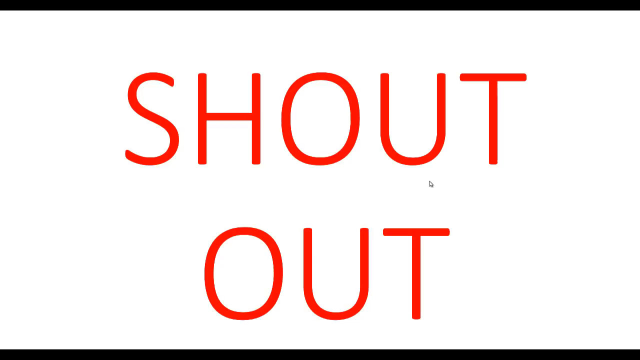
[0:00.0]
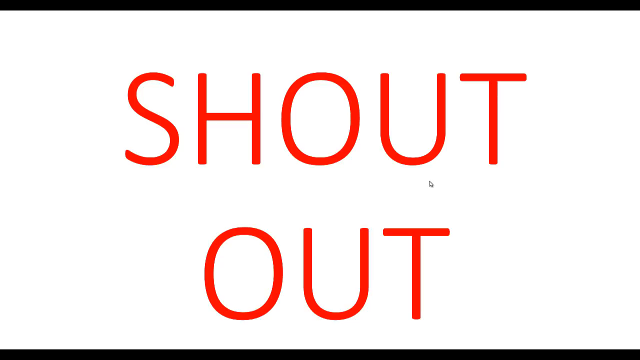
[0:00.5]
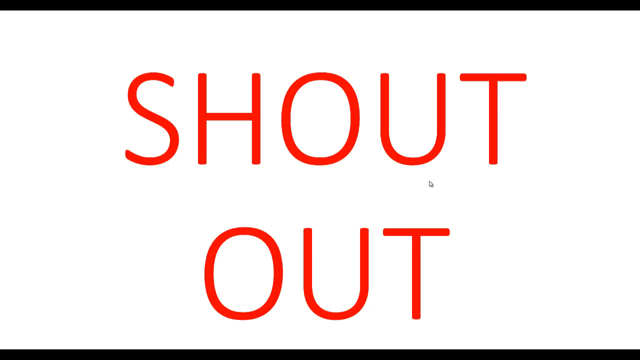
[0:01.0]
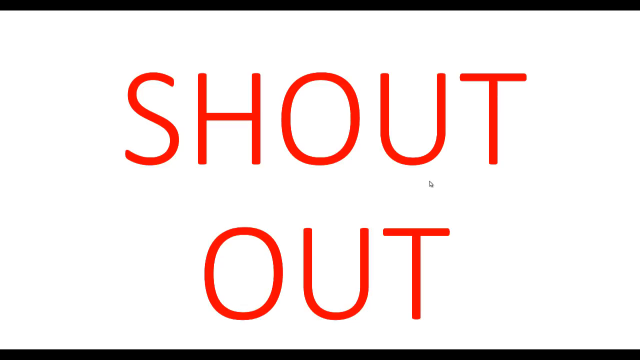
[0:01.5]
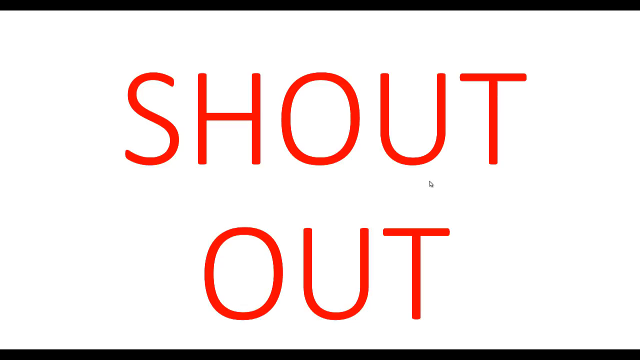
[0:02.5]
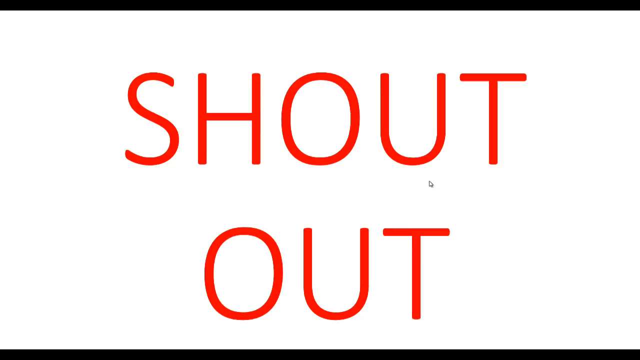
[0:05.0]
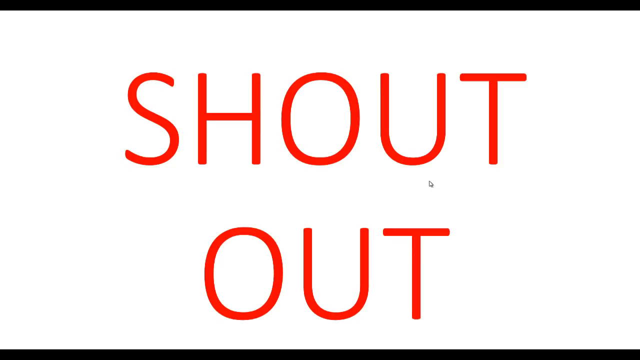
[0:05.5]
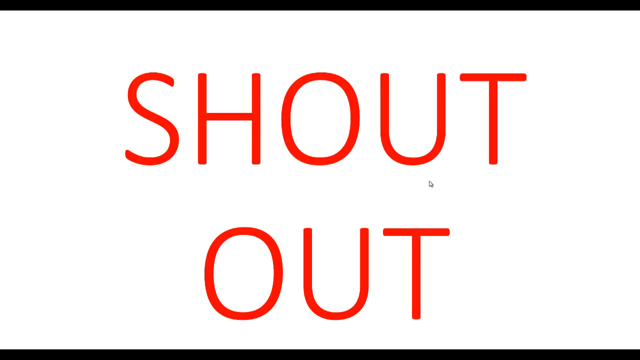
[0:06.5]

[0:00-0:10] A white screen has a black border along the top and bottom only; there are no black lines on the left or right sides. In the centre, the words "SHOUT OUT" are written in bright red capital letters. Nothing else appears and there is no movement: just the white background, the black border and the red capital text.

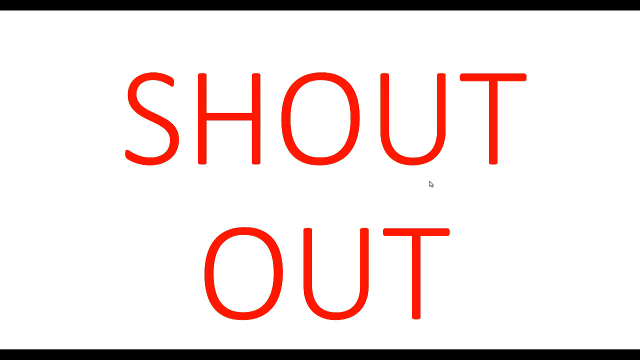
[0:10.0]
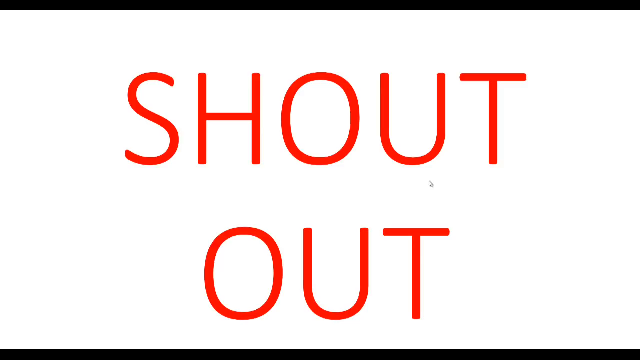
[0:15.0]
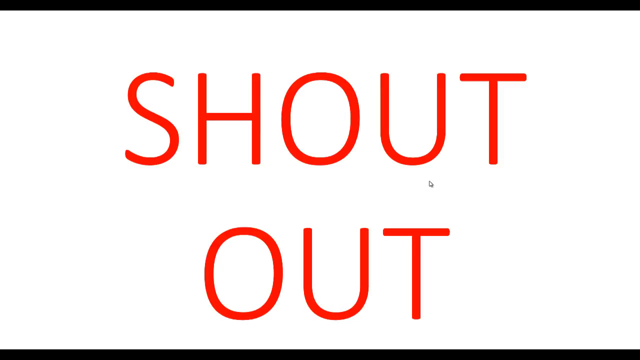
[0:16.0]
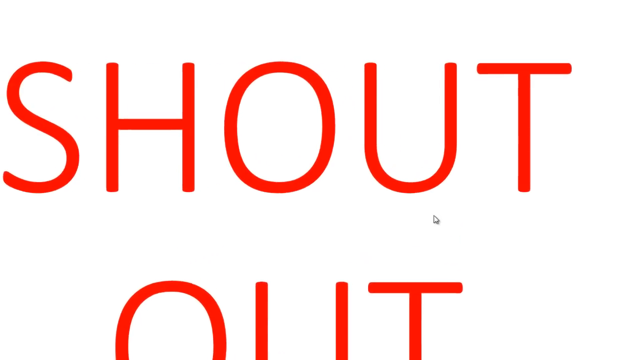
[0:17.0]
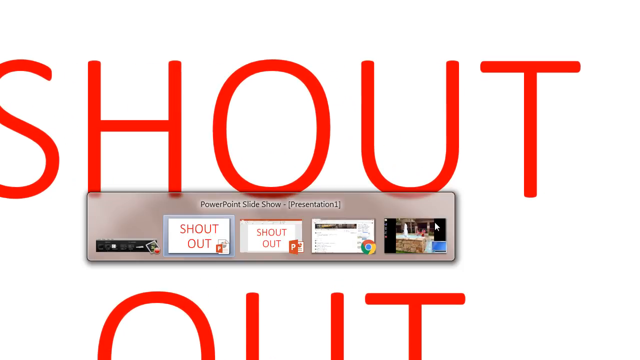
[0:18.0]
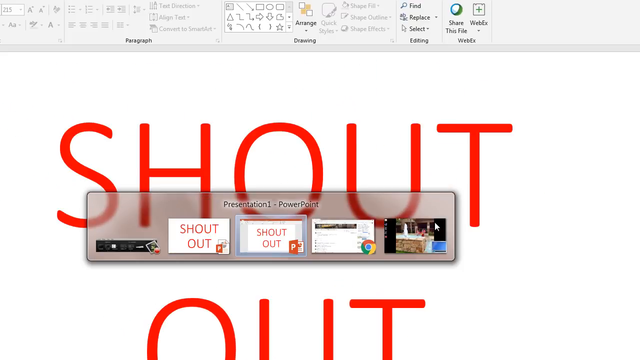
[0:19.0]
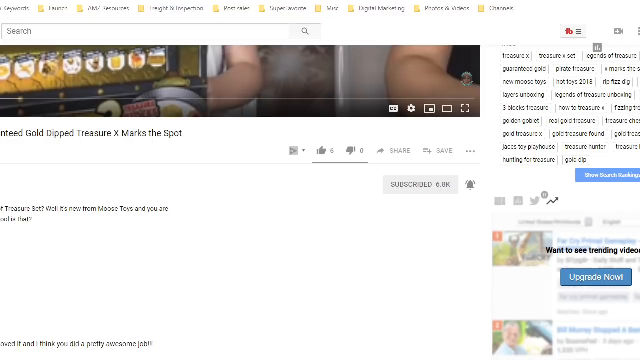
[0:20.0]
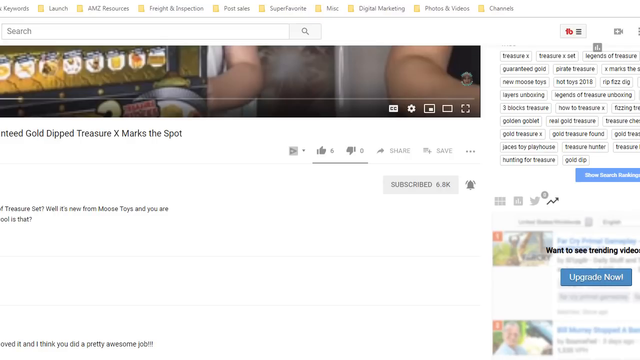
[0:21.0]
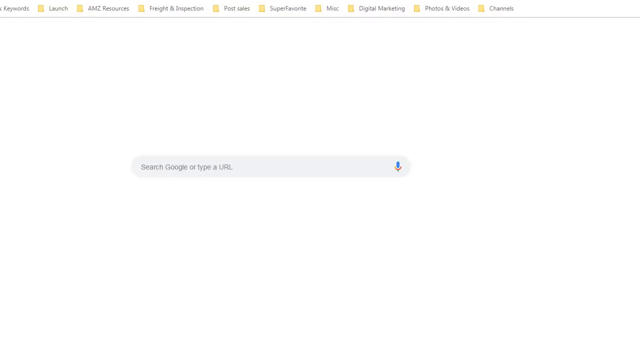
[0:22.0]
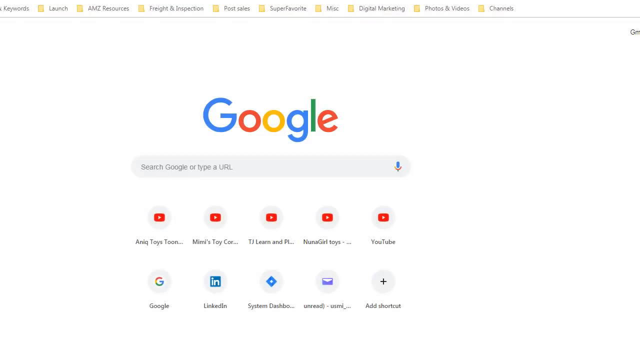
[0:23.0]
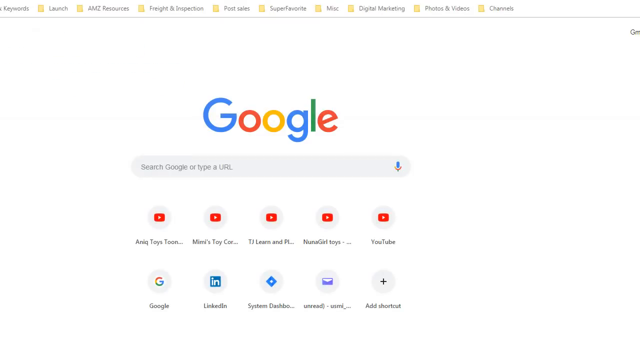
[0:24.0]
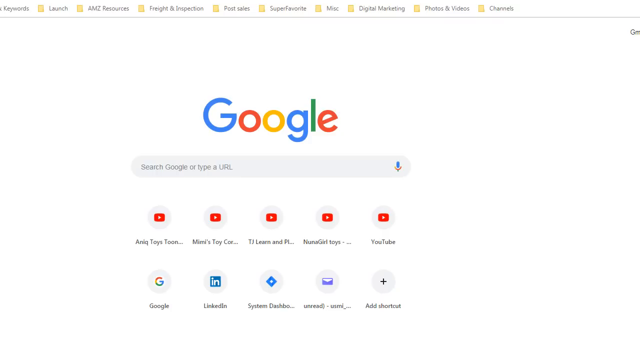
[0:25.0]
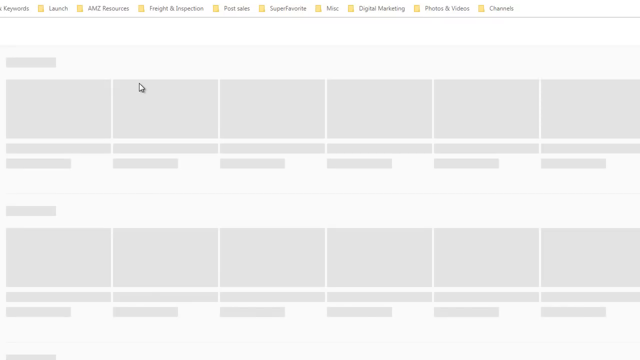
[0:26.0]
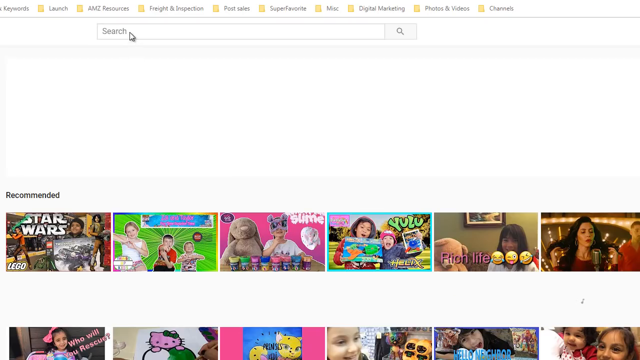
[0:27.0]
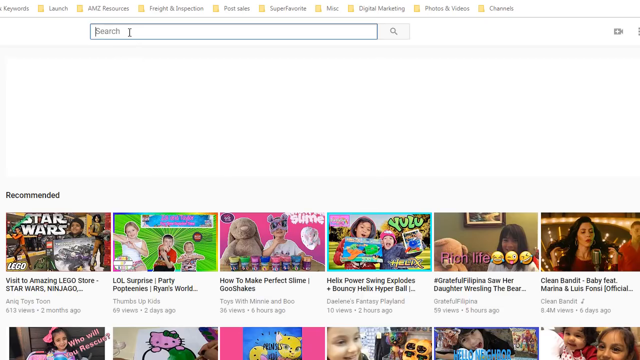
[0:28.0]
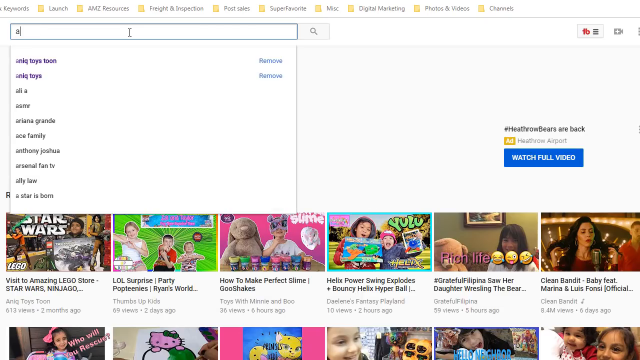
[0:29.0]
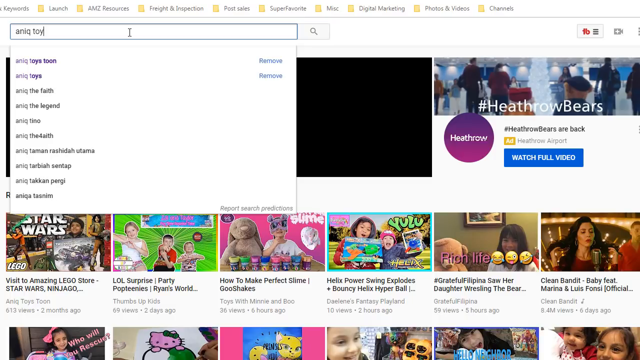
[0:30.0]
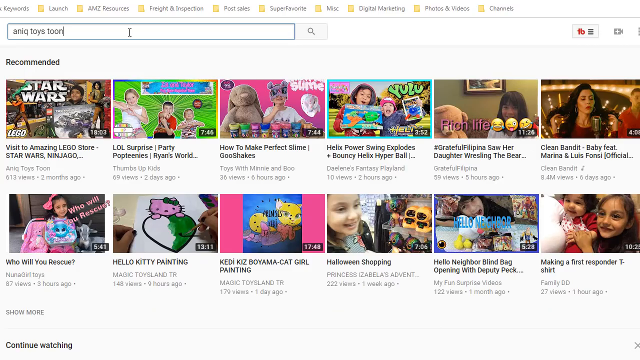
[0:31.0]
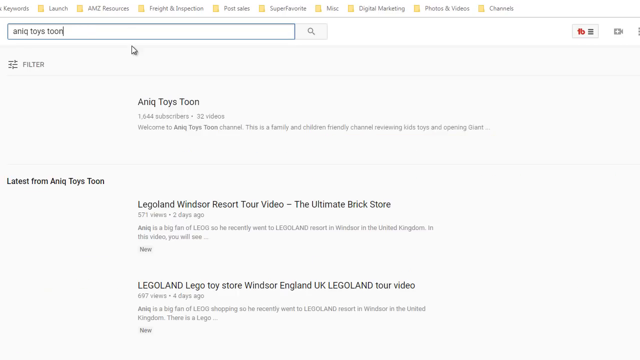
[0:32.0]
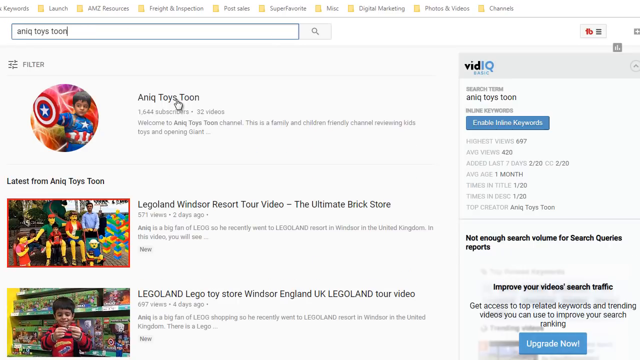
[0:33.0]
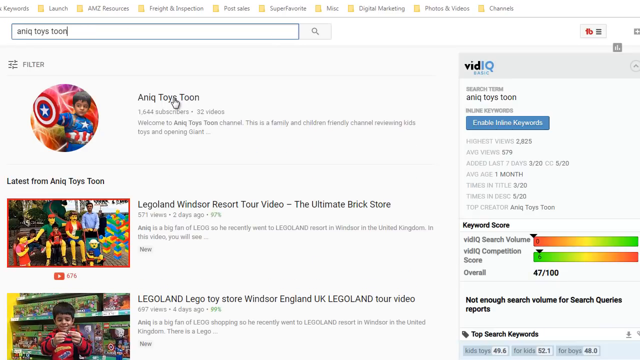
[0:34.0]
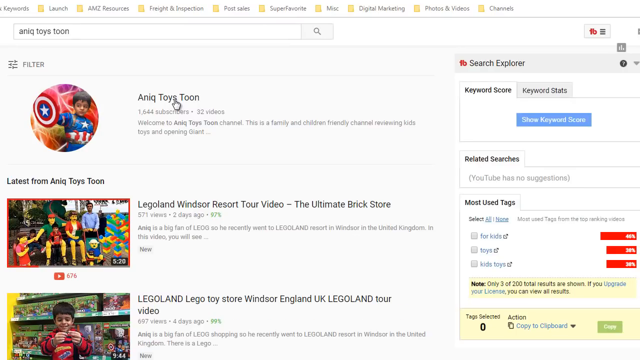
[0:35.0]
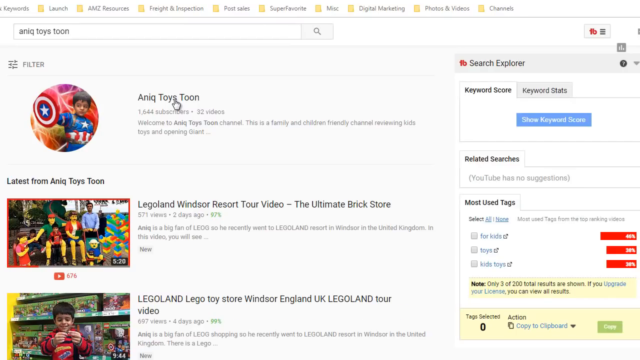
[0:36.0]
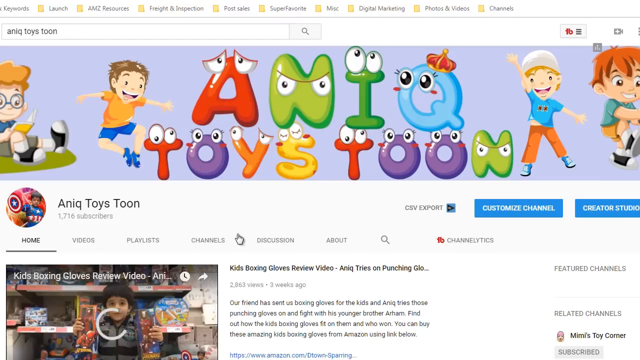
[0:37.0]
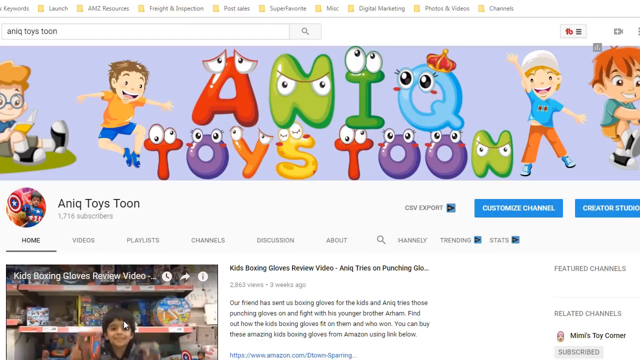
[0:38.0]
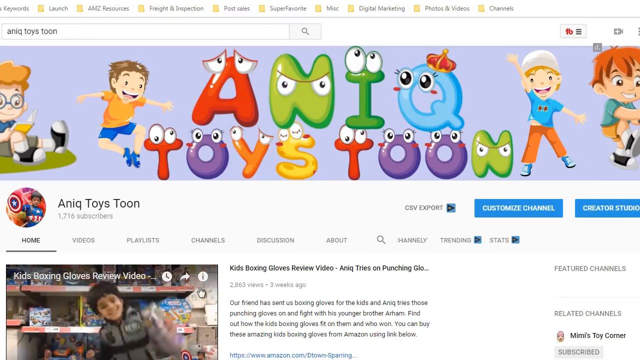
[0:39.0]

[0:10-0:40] The white screen shows the words "SHOUT OUT" in red capital letters, with a black border along the top and bottom of the screen but none on the left and right sides. The words then zoom into the screen. Someone is then searching for something on Google. While they search, a lot of things are on the screen, including videos and different folders; the videos at the bottom are mostly things for children, Star Wars and cartoon characters. The person types "aniq Toys Toon" into the search bar. The page then pops up on the screen, with a lot of animation everywhere.